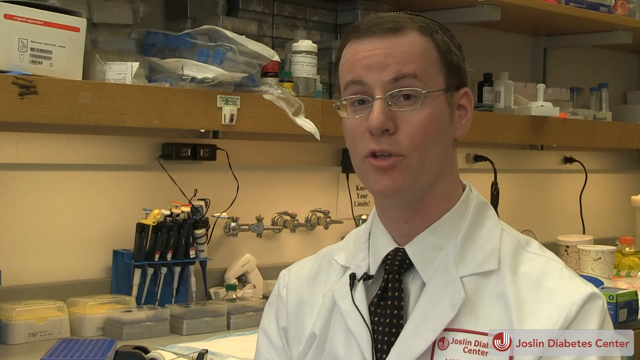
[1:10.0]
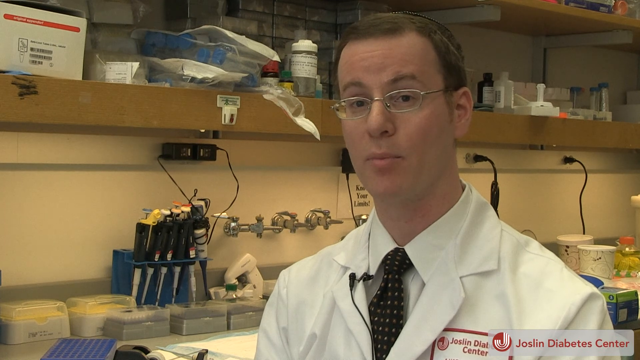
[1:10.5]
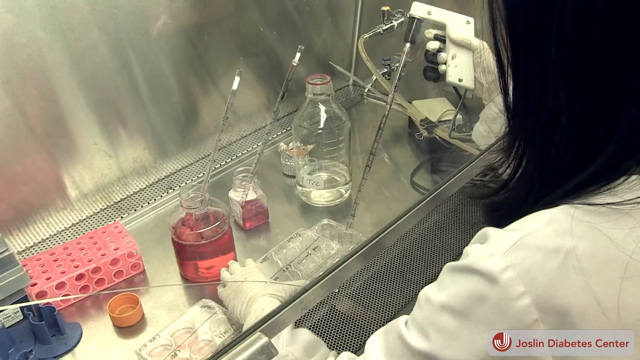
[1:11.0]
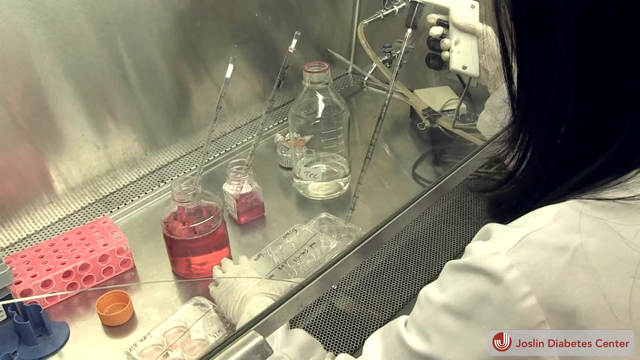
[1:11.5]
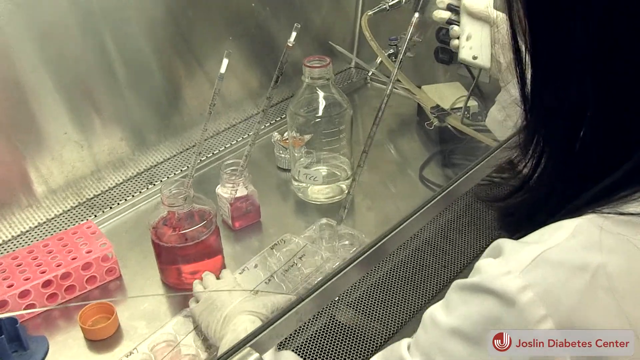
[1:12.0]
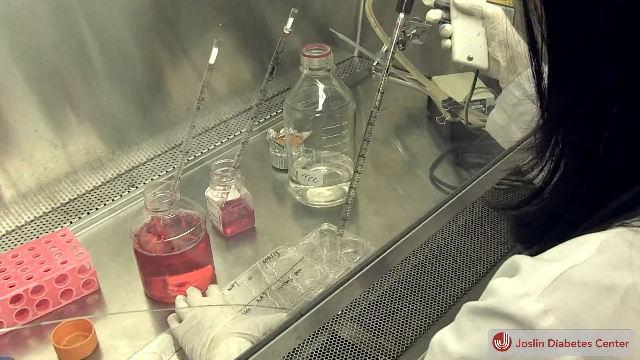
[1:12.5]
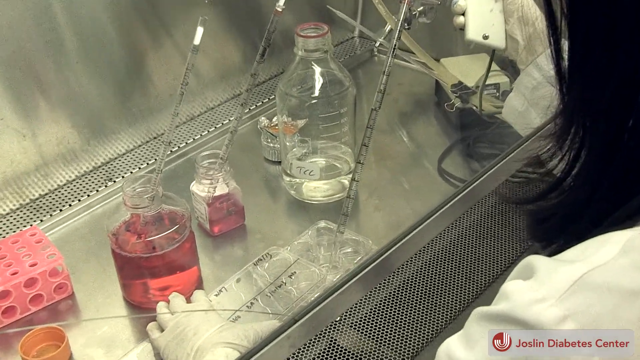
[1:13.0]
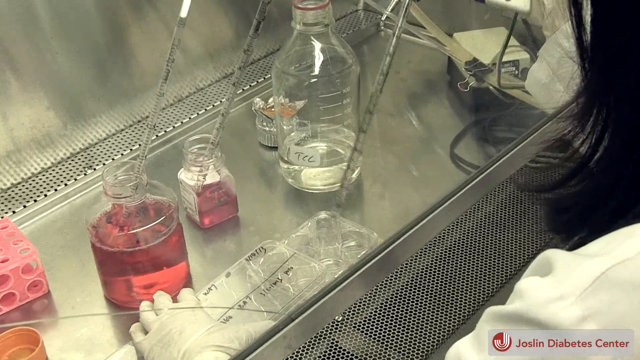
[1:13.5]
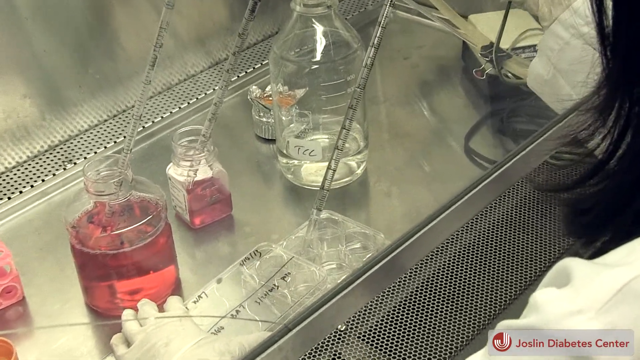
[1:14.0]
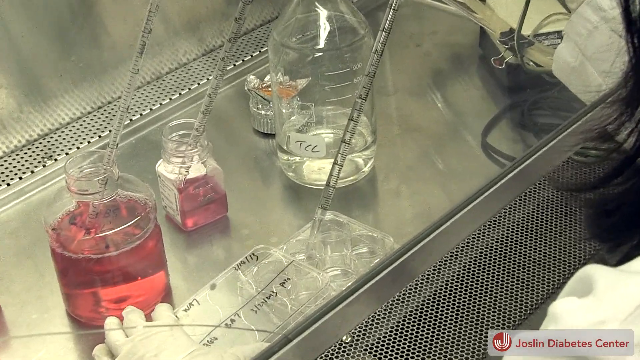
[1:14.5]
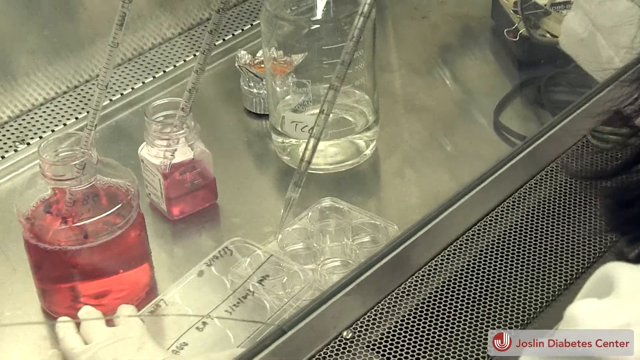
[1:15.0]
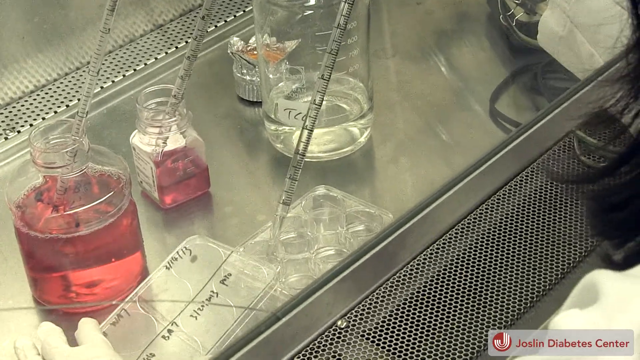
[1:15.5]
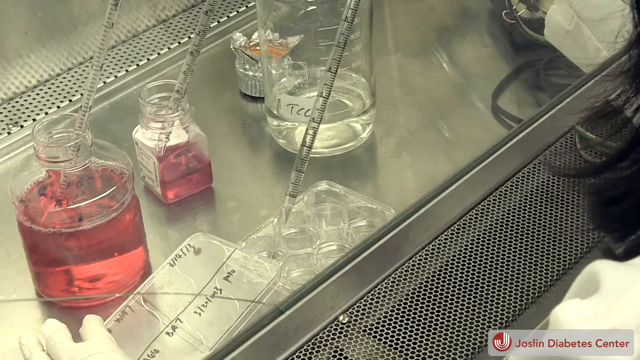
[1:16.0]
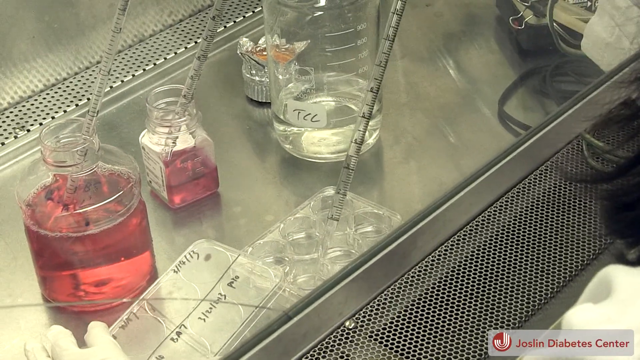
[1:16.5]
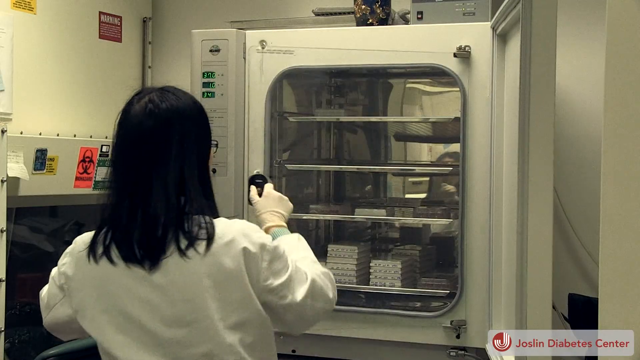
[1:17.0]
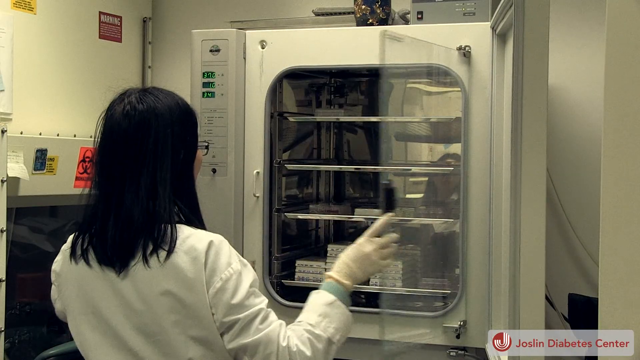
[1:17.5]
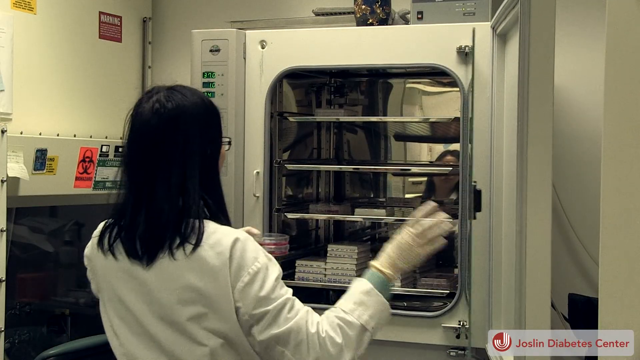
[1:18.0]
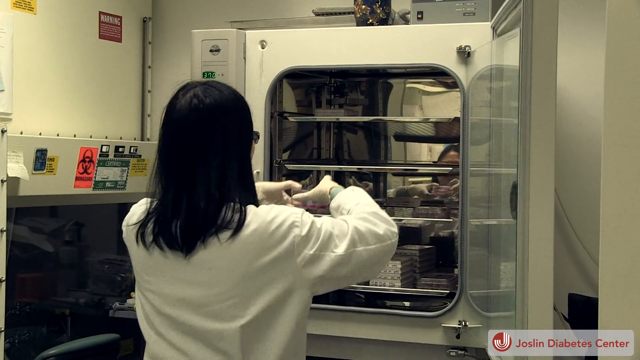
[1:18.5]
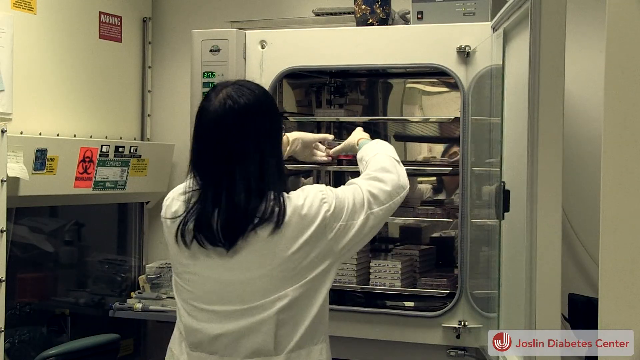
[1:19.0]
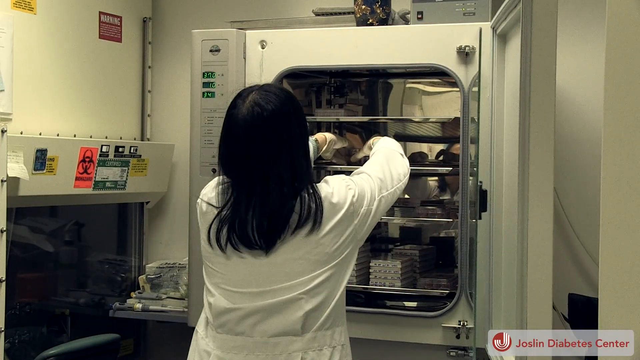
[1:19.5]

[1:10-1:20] The view looks into an experiment chamber containing some glass jars and bottles, as well as some dishes, pipettes and syringes. Two of the three glass jars contain a reddish-pink liquid, and the other contains a clear liquid. A scientist with long black hair, wearing a white lab coat and white disposable gloves, handles some of the materials inside the chamber. She seems to be holding a translucent dish in her left hand and a pipette or syringe in her right hand. She then dispenses some clear fluid into each section of the glass dish. Afterwards, she places a dish containing a pink liquid into a chamber.